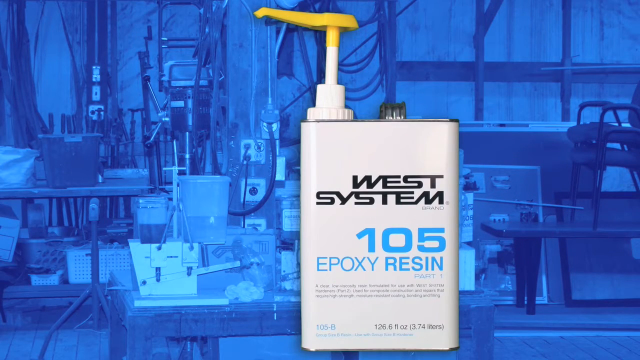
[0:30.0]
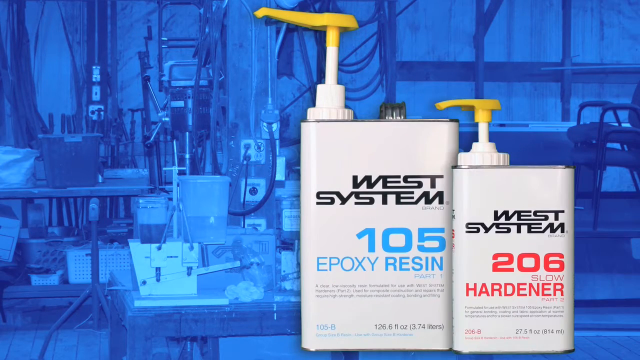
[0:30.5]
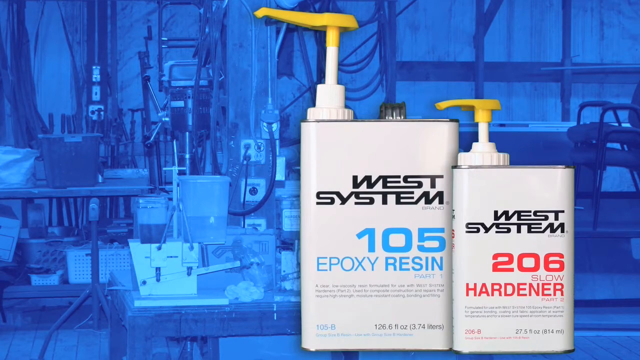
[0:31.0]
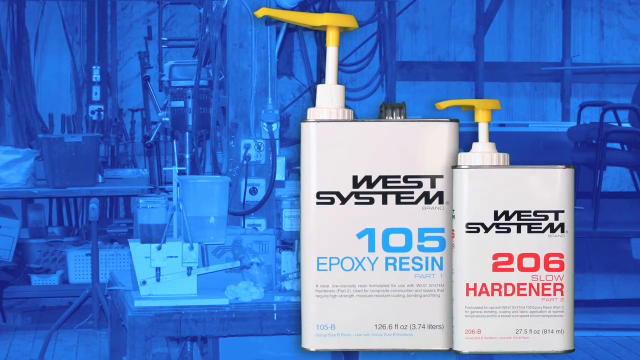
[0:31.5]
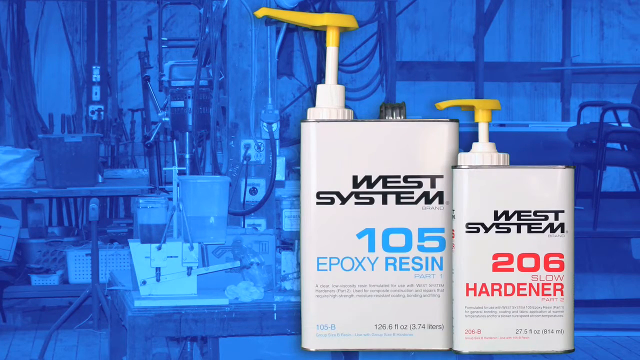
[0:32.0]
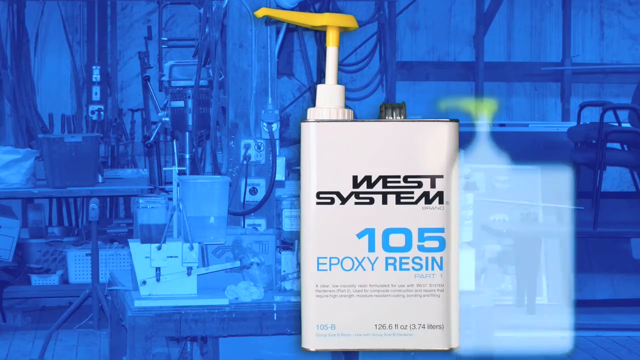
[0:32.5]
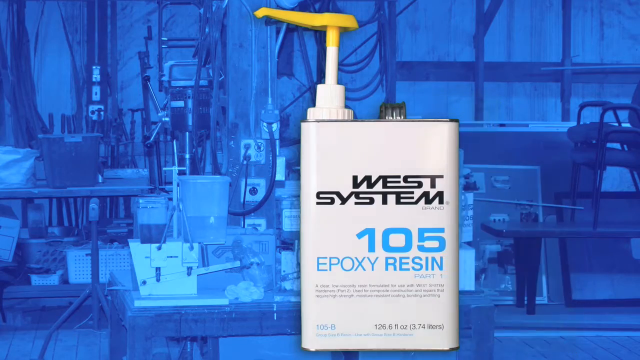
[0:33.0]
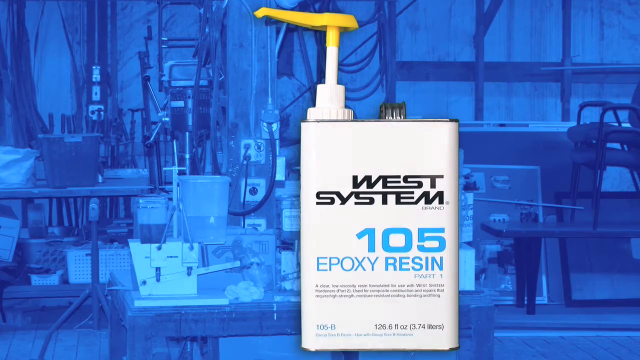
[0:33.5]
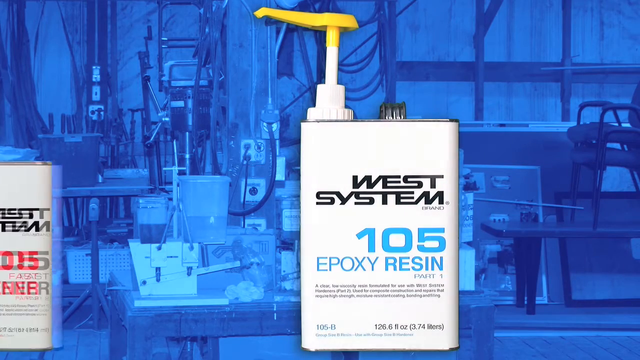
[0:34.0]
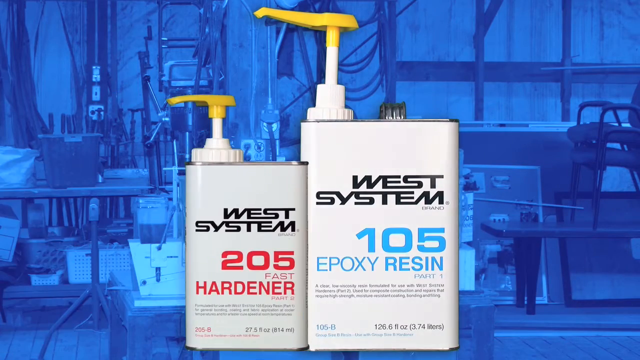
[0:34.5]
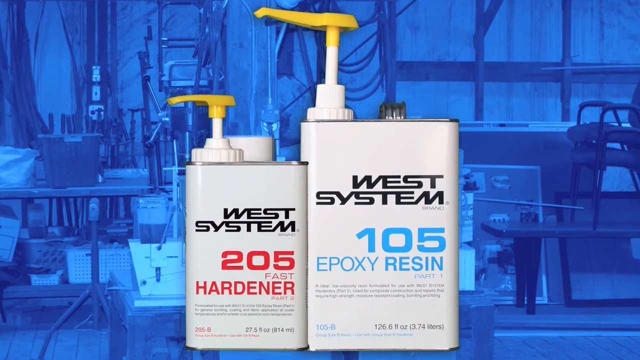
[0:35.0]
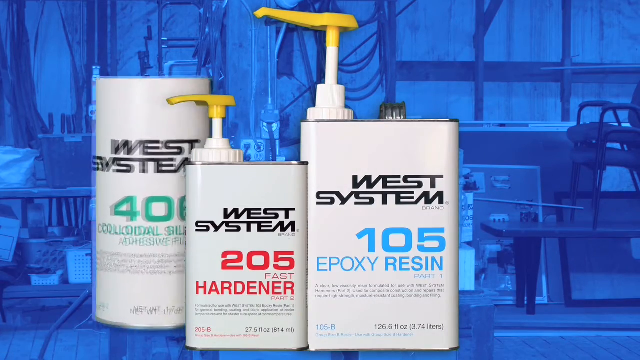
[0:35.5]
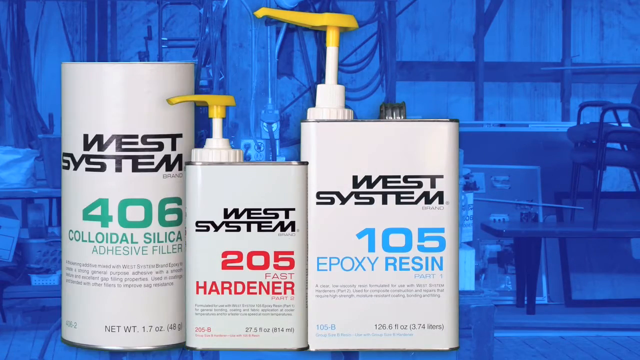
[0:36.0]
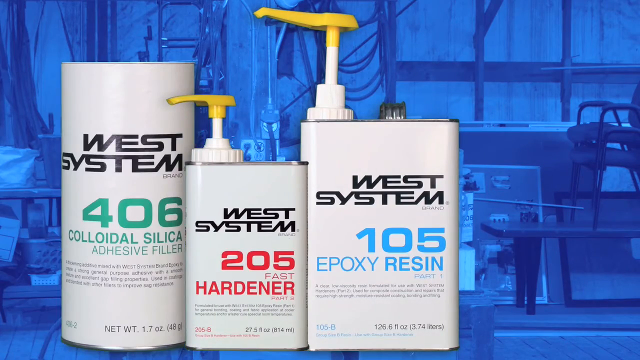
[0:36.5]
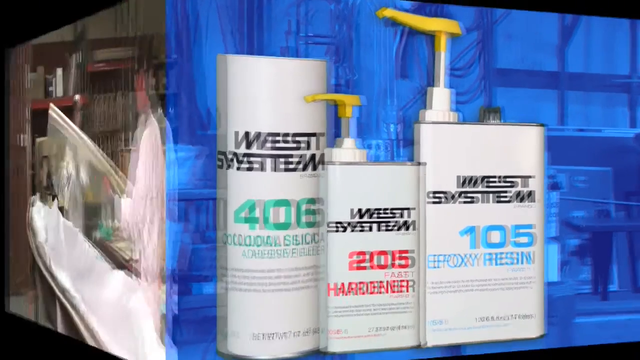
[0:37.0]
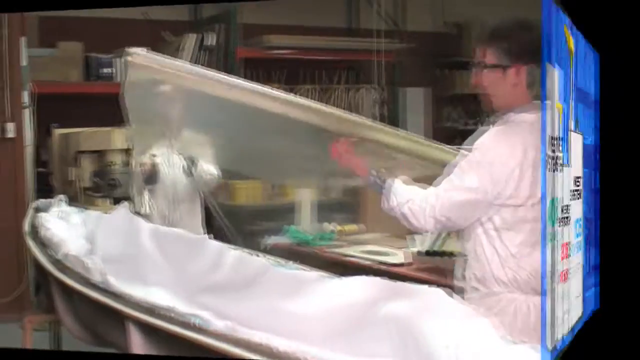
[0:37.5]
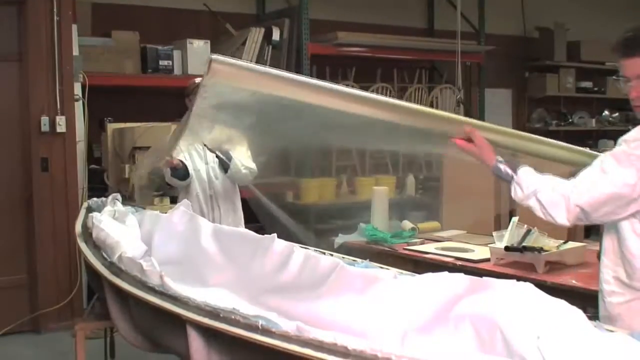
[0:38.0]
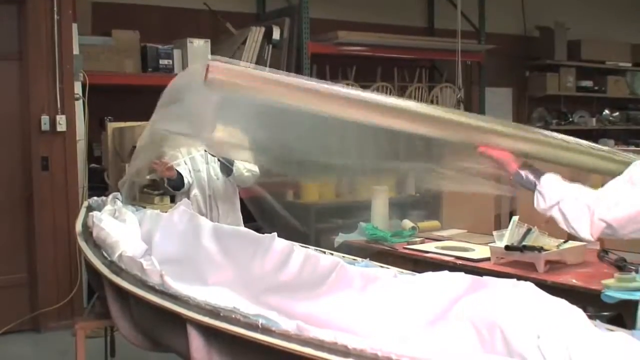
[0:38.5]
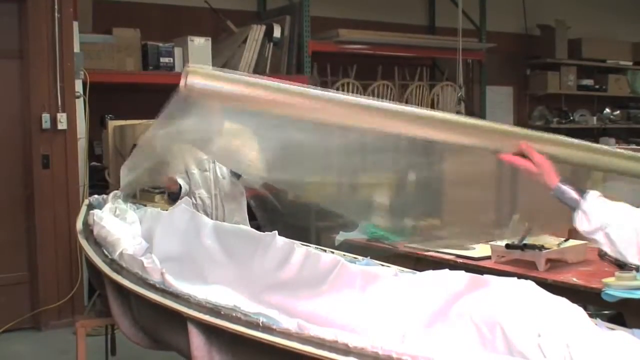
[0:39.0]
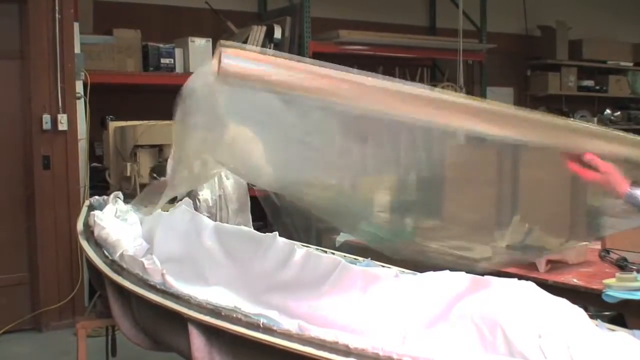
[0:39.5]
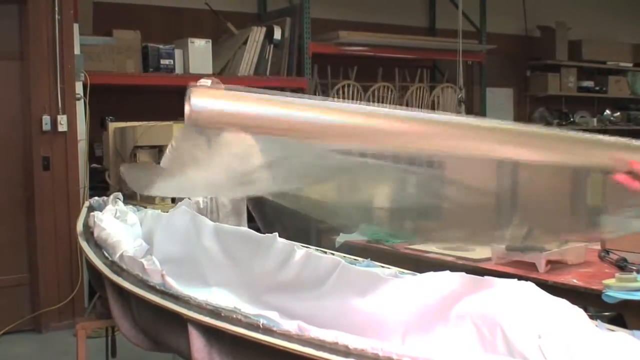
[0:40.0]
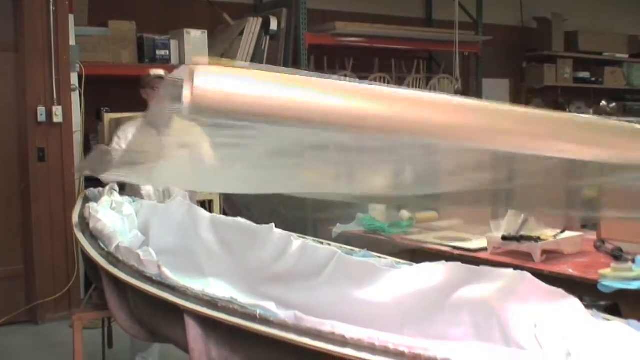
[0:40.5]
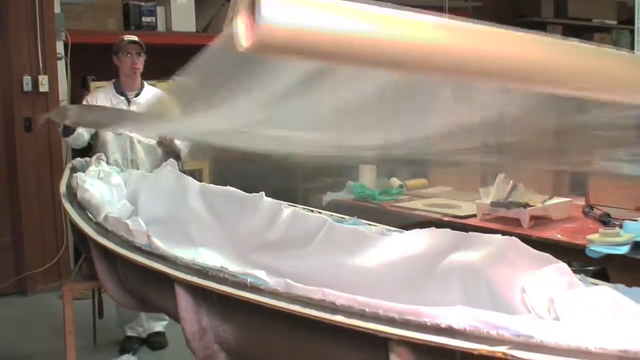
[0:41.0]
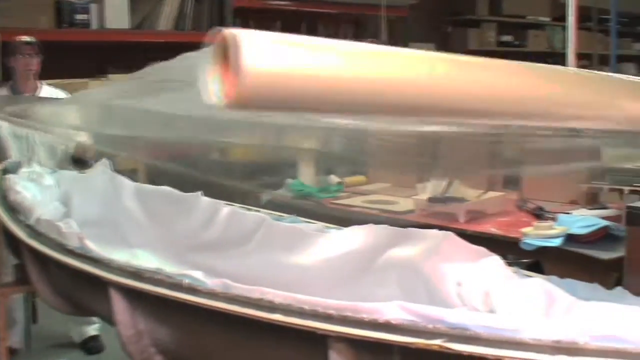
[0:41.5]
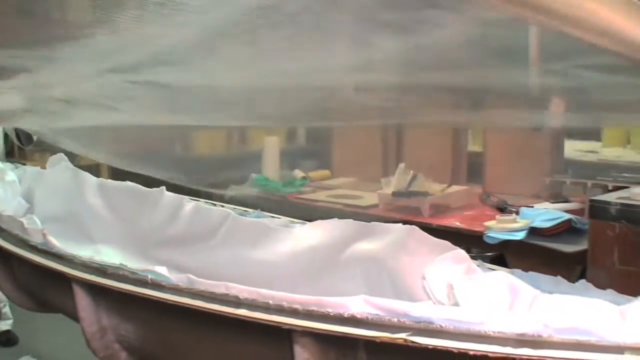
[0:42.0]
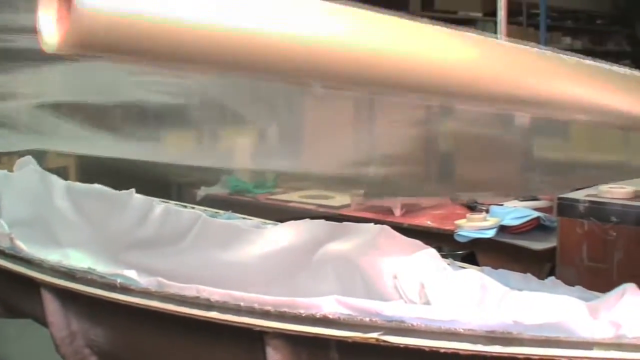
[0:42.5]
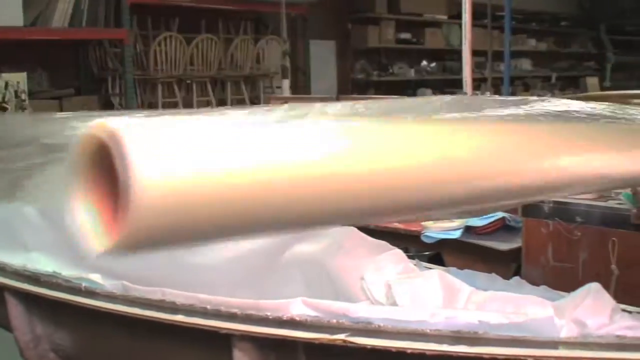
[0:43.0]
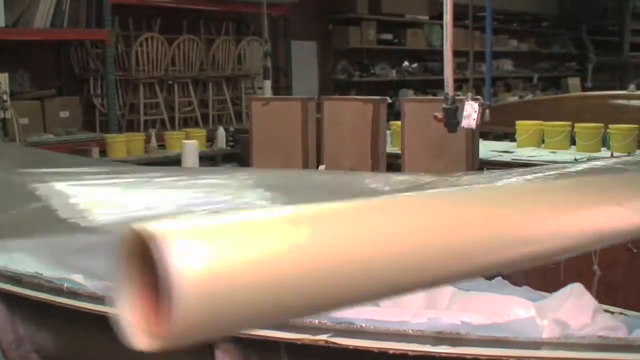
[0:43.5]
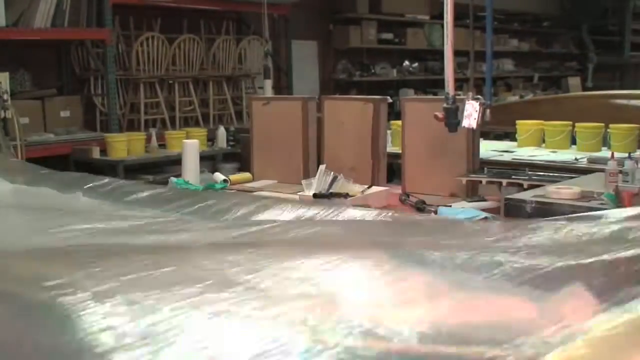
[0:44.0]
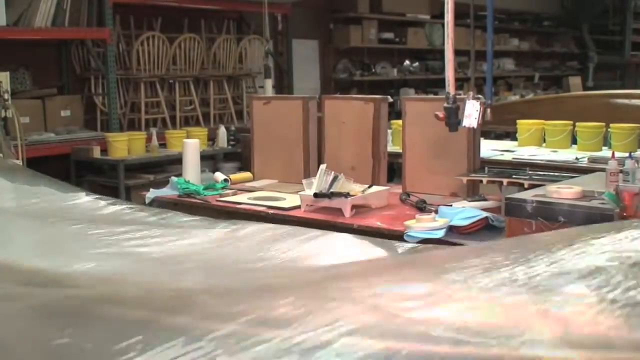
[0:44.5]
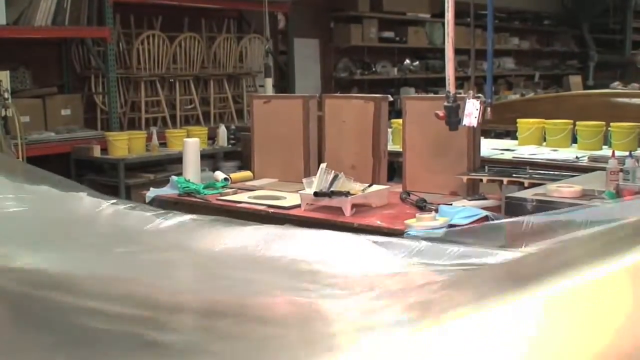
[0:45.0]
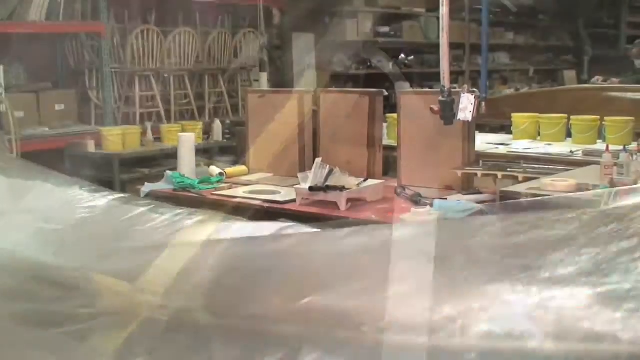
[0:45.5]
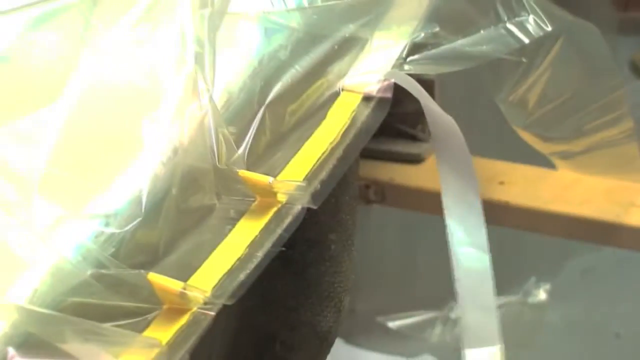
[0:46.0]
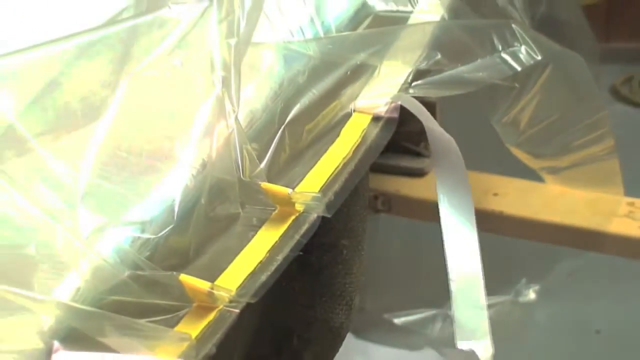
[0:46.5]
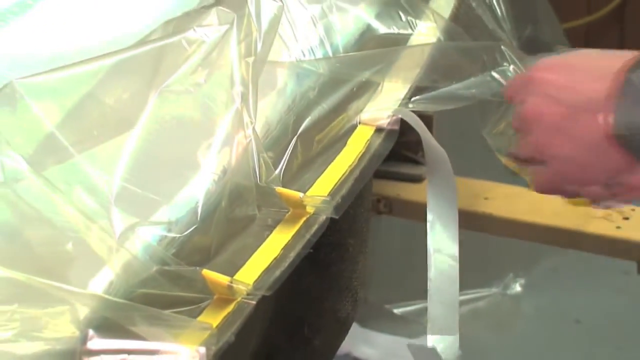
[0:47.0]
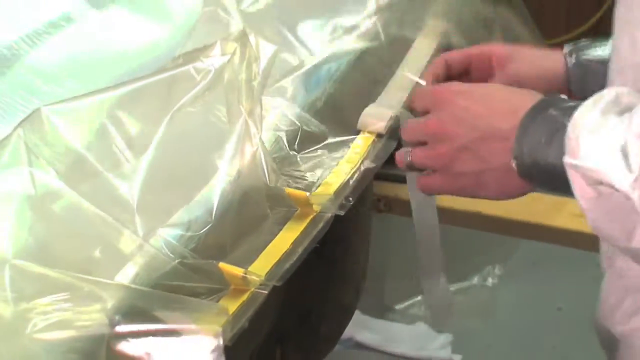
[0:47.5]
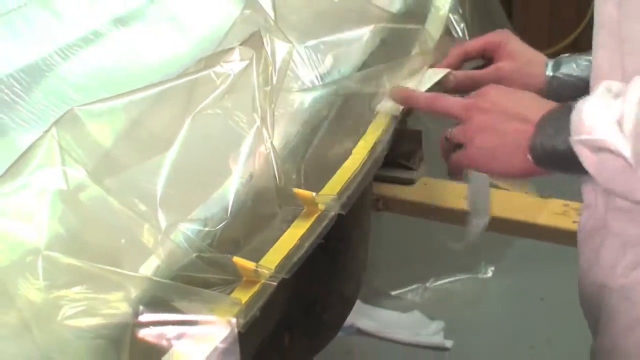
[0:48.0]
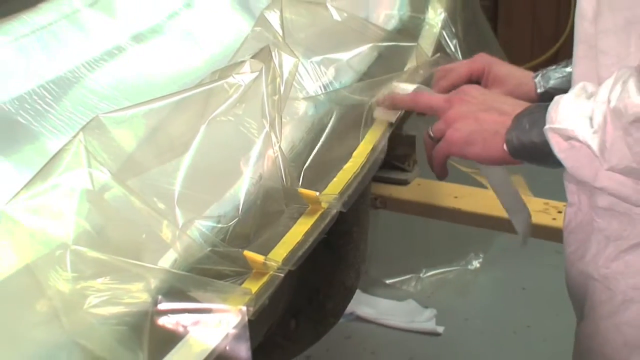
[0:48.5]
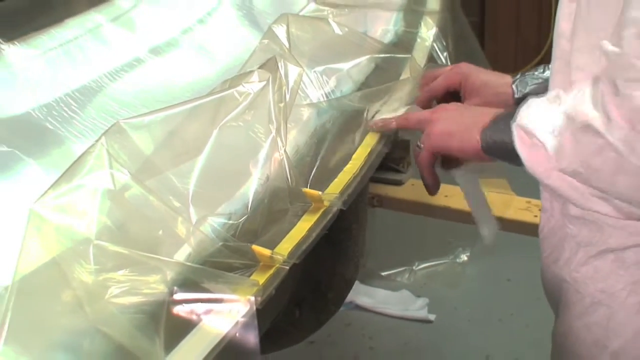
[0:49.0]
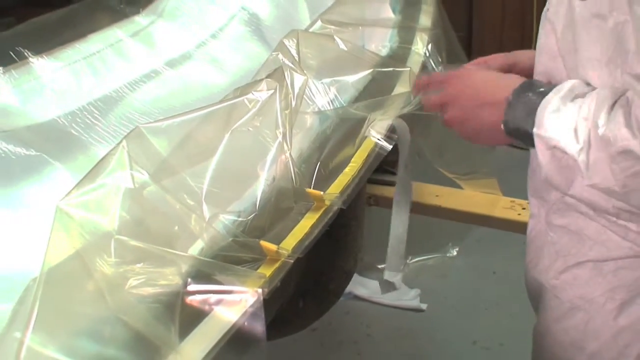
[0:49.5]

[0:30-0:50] The video continues by showing more objects. On the right side are what look like stainless steel canisters, two in total, both with yellow nozzles on top. The first container says "West system 105 epoxy resin" and the second has the words "West system 206 slow hardener". Behind them is a blue background with several objects, including tables, plastic containers, chairs and pipes. A new cylinder-shaped container then pops up with the words "West system 406 colloidal silicate adhesive filler". The video then moves to an indoor setting where two men roll a very large roll of what looks to be plastic cover, covering an object that looks to be a canoe. One of the men then places tape on the sides of the canoe, covering it with plastic.